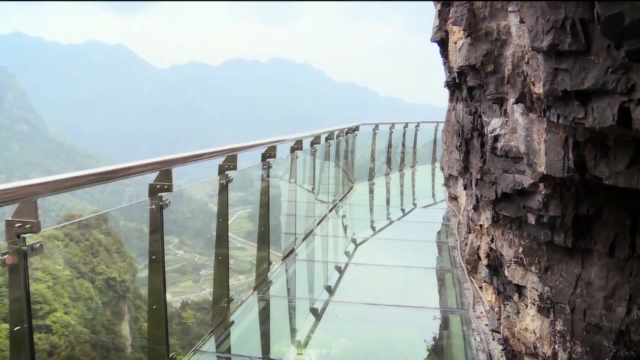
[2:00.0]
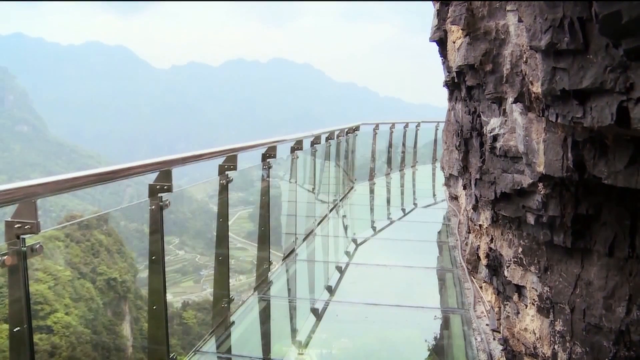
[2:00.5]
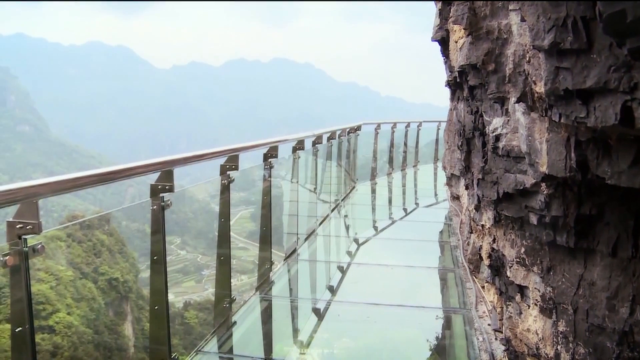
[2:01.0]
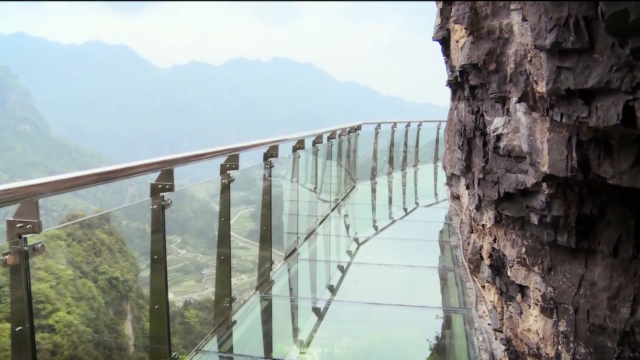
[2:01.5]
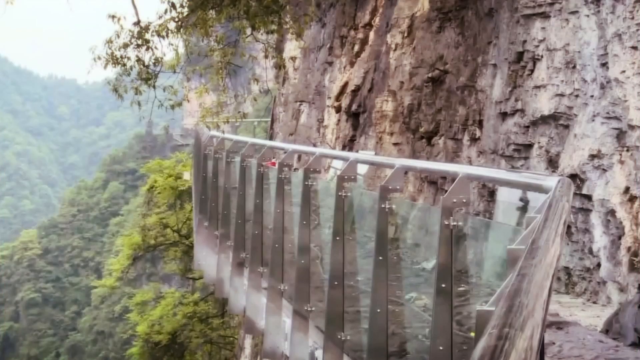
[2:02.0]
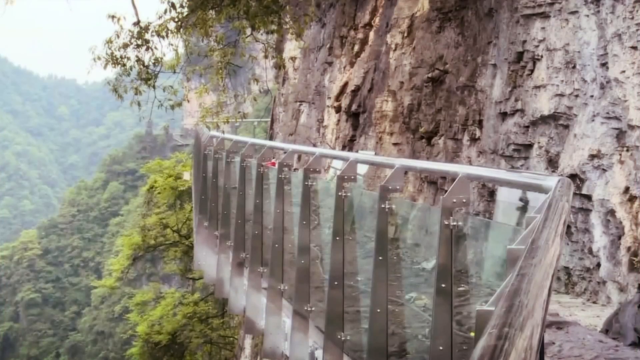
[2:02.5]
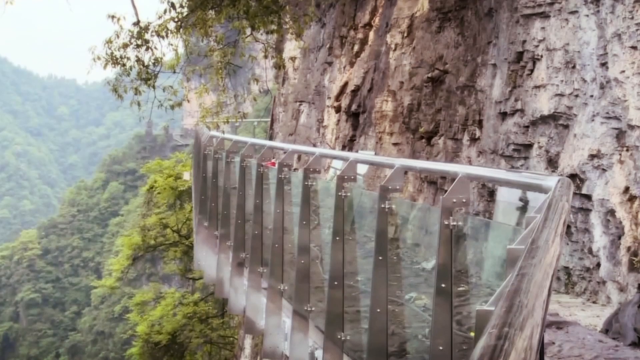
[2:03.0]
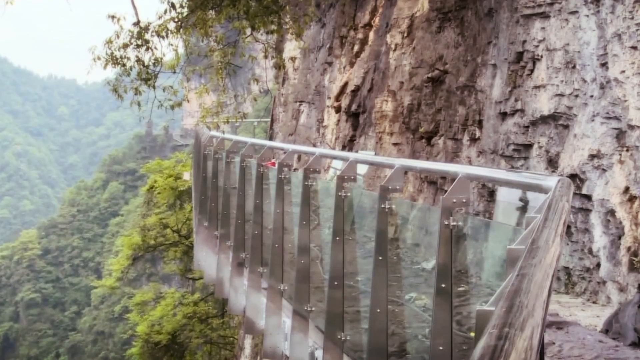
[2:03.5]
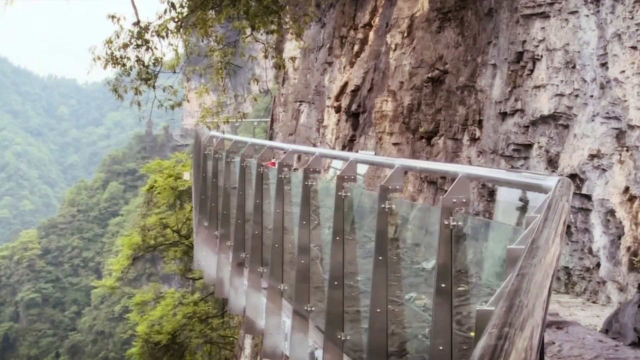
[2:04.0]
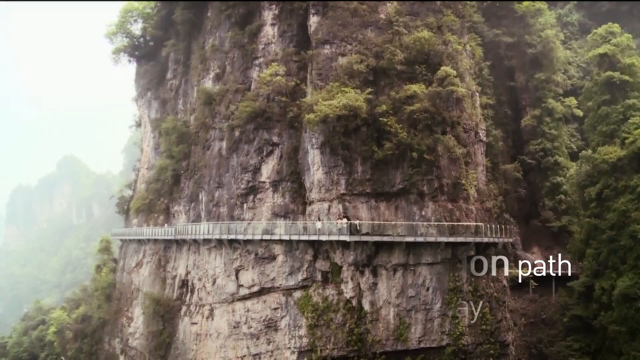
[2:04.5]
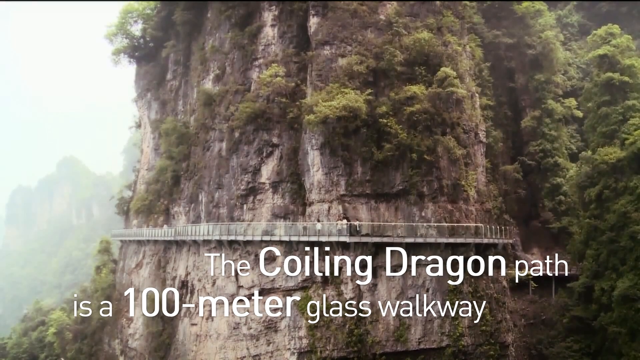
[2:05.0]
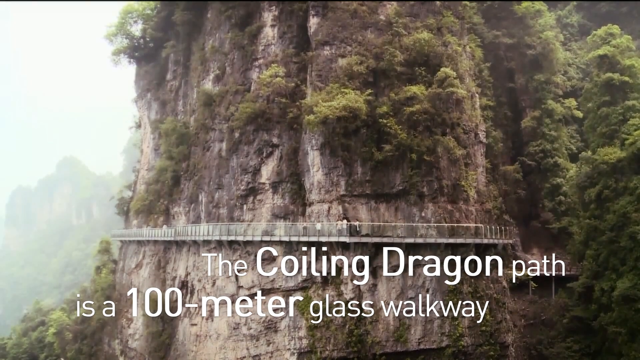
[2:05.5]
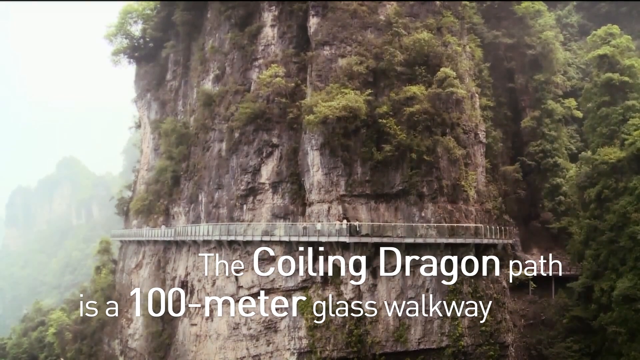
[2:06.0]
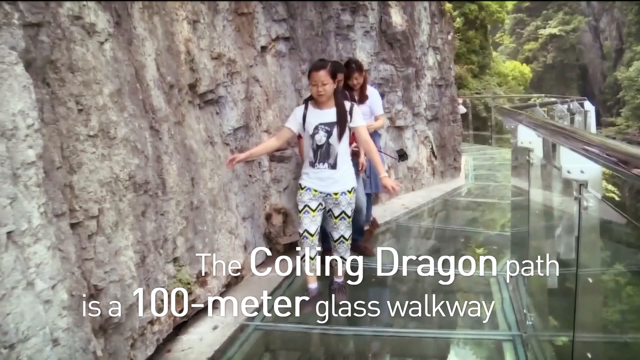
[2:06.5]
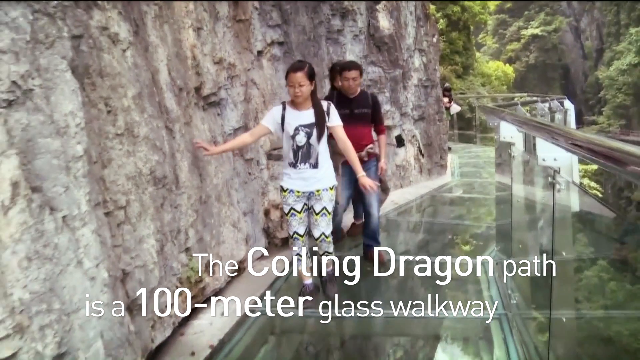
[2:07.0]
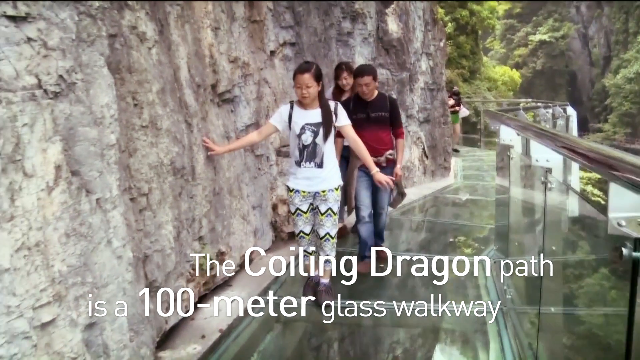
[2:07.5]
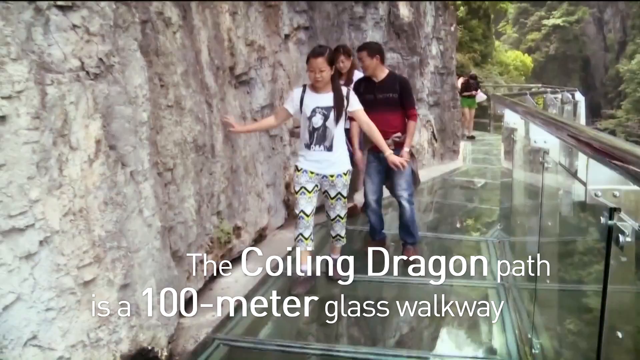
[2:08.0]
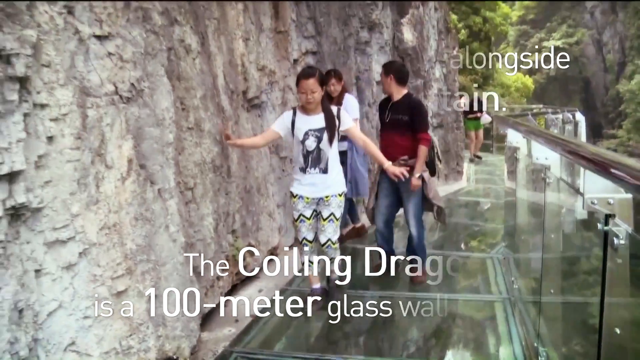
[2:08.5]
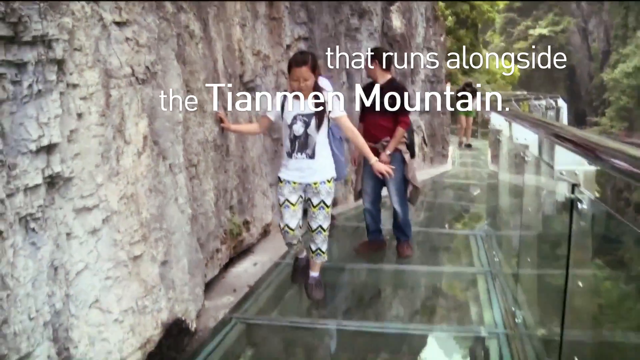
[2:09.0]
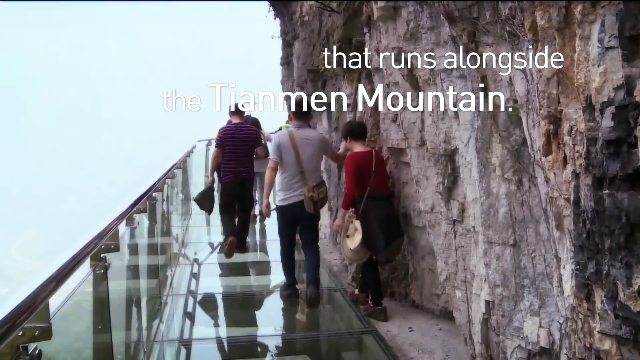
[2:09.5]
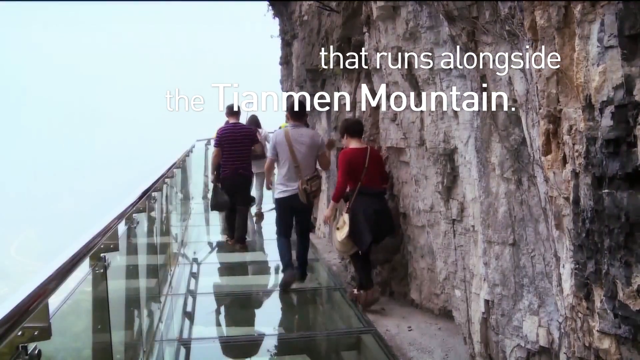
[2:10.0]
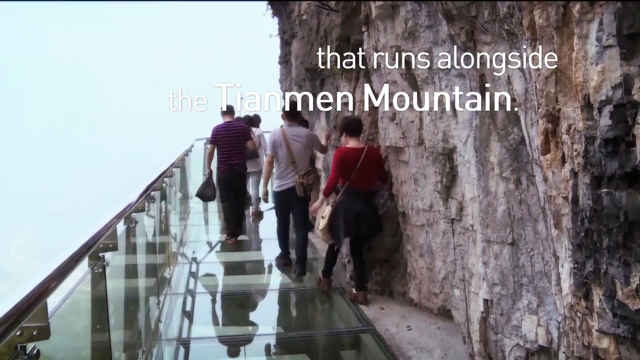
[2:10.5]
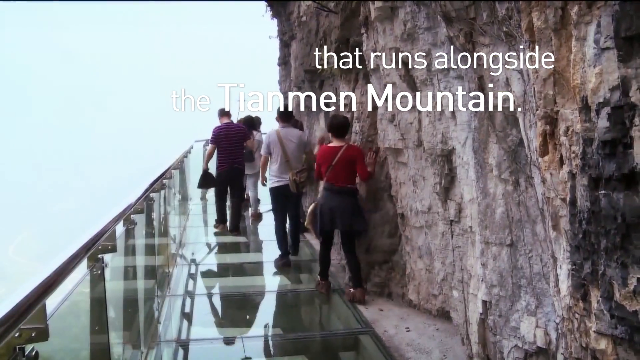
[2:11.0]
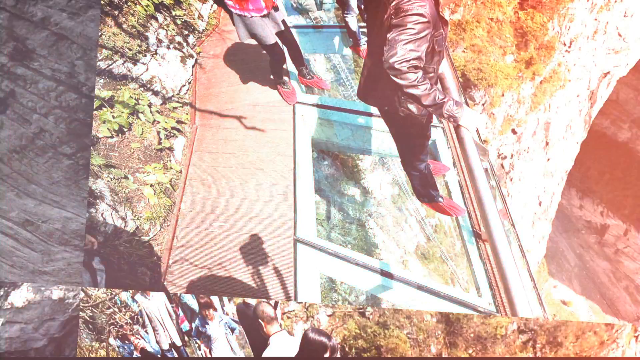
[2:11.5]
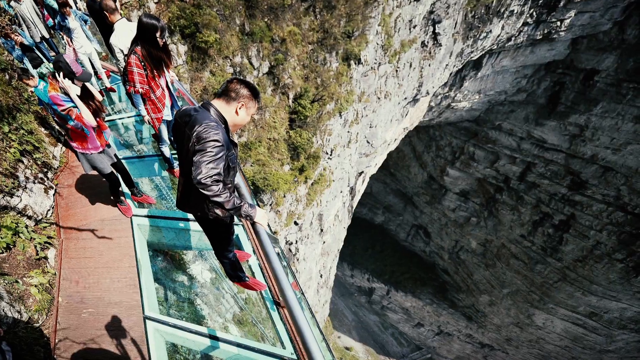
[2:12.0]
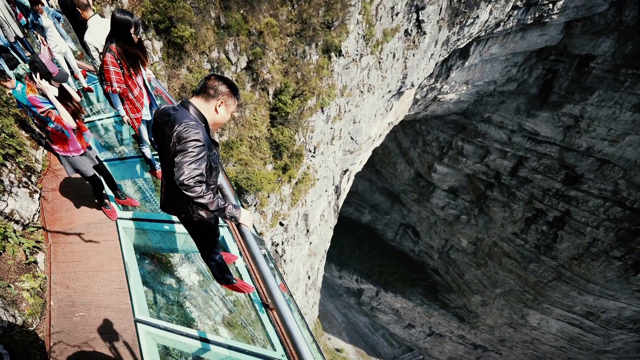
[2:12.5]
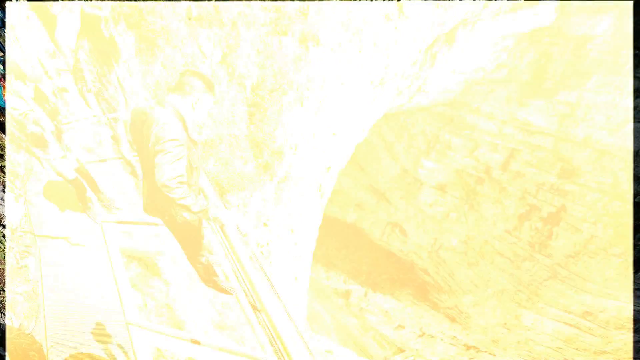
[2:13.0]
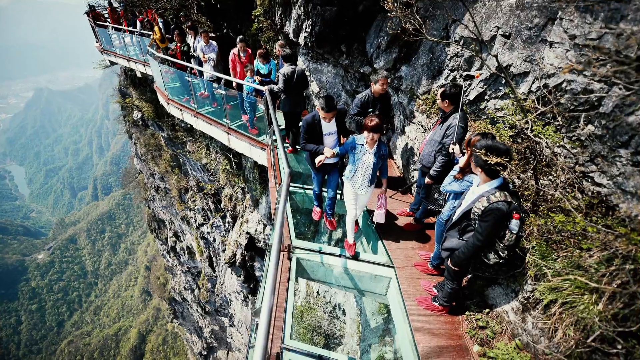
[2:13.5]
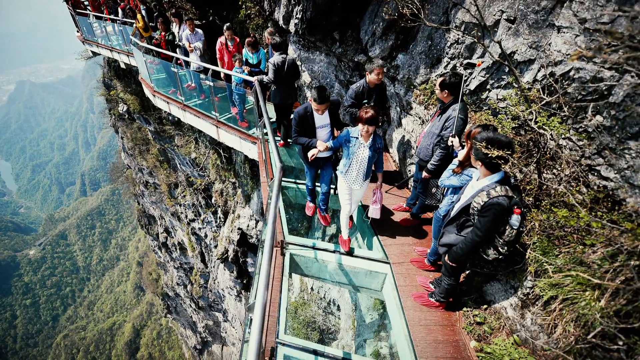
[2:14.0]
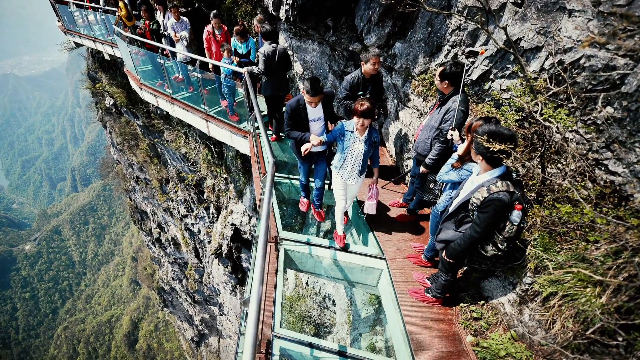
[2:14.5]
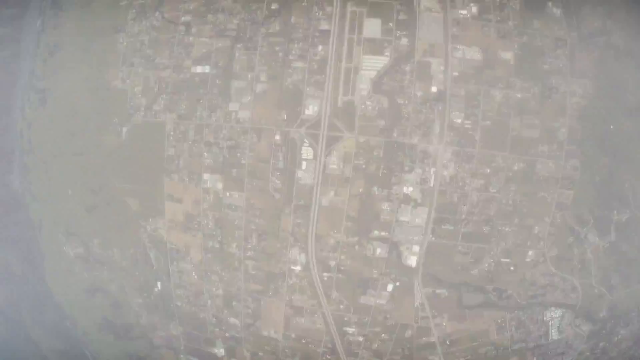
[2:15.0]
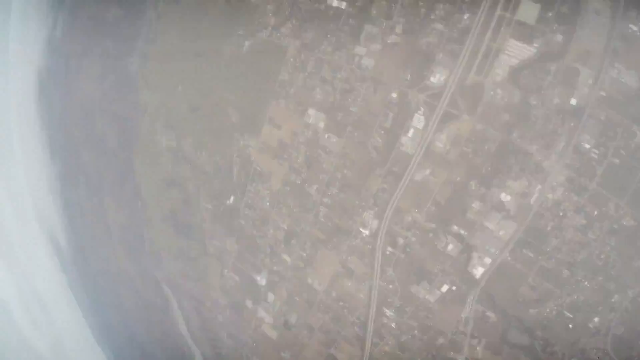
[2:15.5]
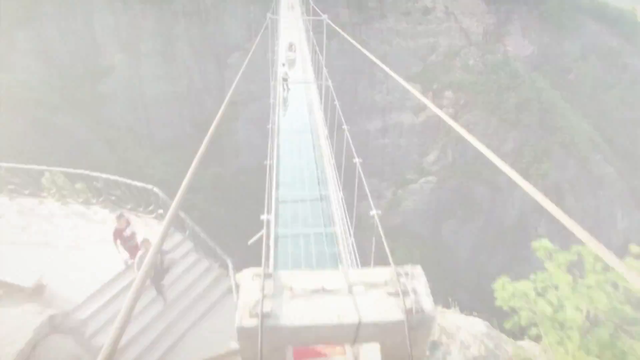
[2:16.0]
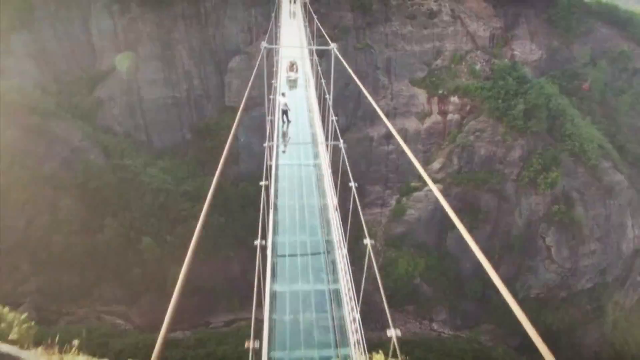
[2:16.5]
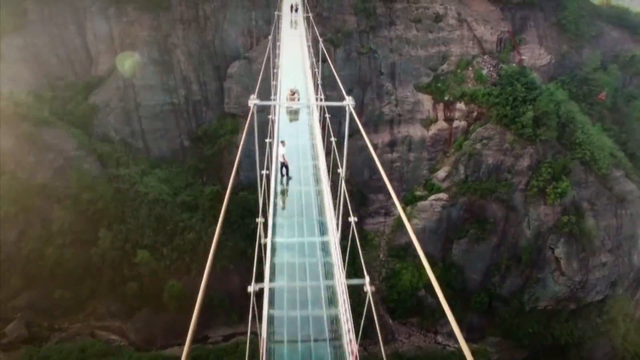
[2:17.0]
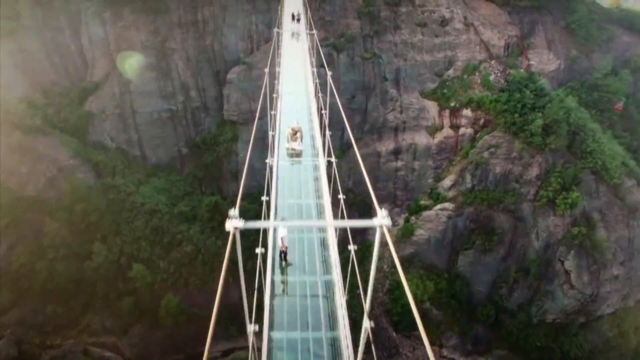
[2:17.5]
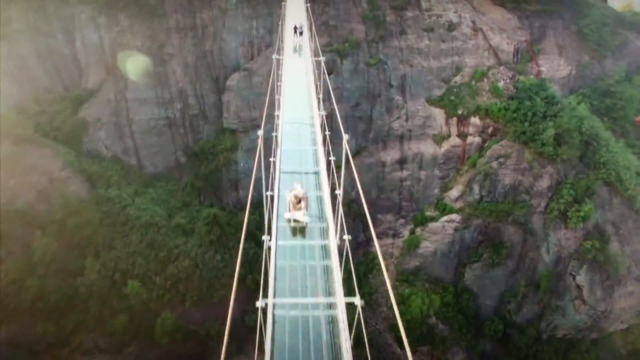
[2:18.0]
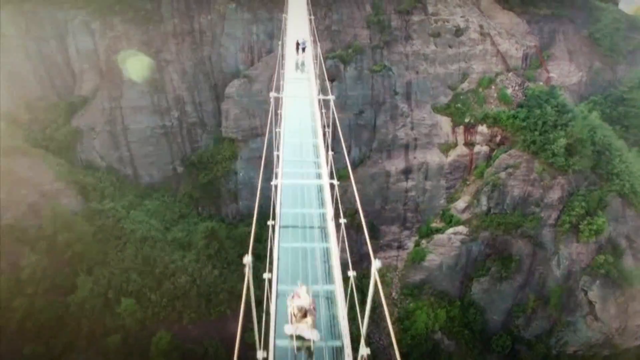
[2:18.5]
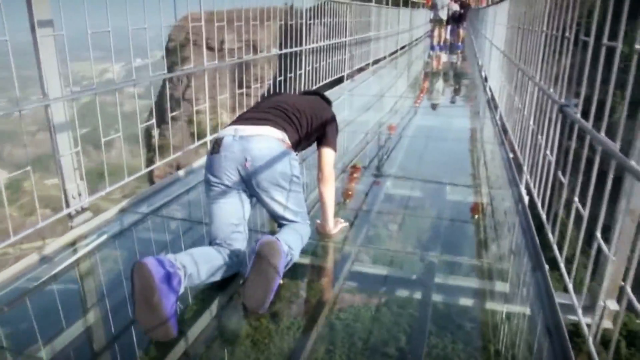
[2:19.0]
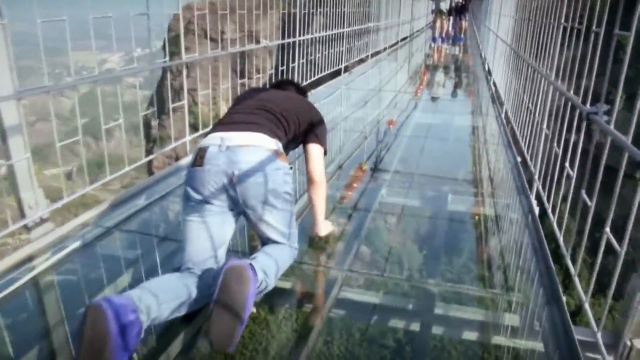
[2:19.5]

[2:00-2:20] Someone records as they walk on the glass bridge connected to the side of a mountain; to the right is the mountain, which can be touched while standing on the bridge. Text reads "the coiling dragon path is a 100 meter glass walkway" as three people walk over it. A cut shows text reading "that runs alongside the Tiananmen mountain" while people's backs are seen as they walk past on the mountain. A picture shows somebody looking over the bridge as they walk over it, and many people are shown walking on the bridge, many of them afraid to do it. A very fast-moving shot passes over the bridge seen earlier that goes from mountain to mountain, as someone crawls on it on all fours.